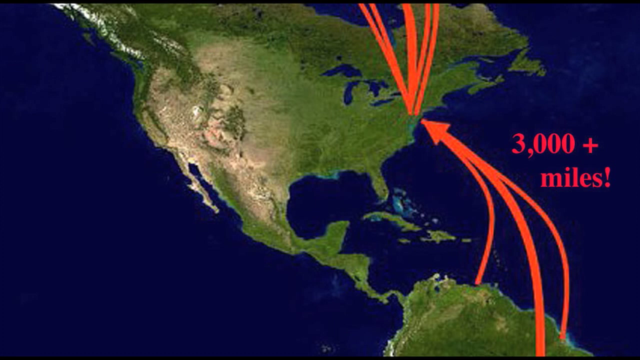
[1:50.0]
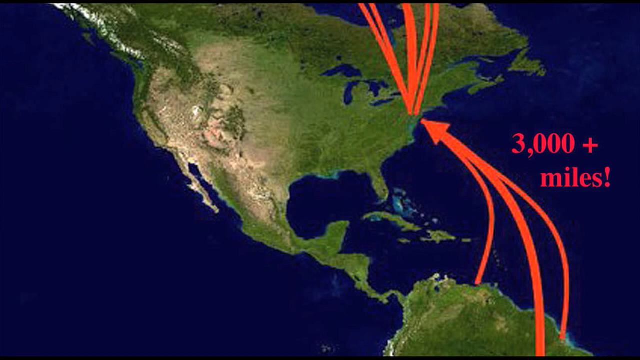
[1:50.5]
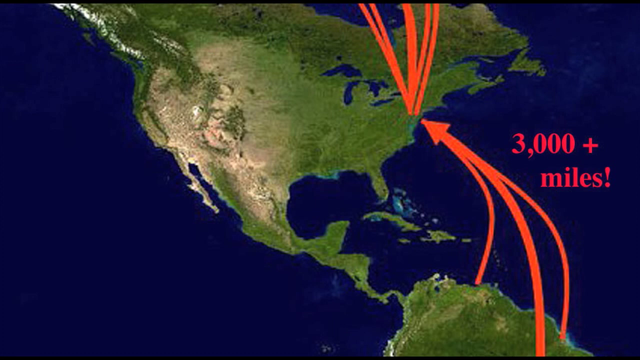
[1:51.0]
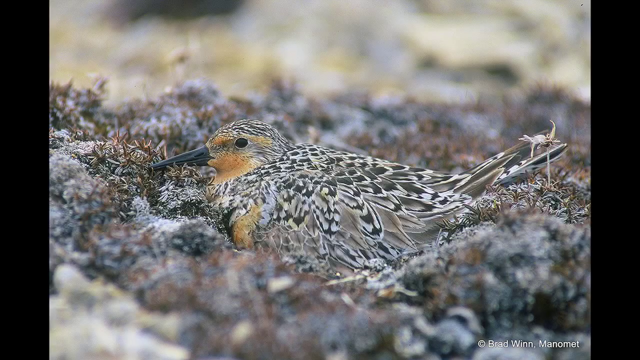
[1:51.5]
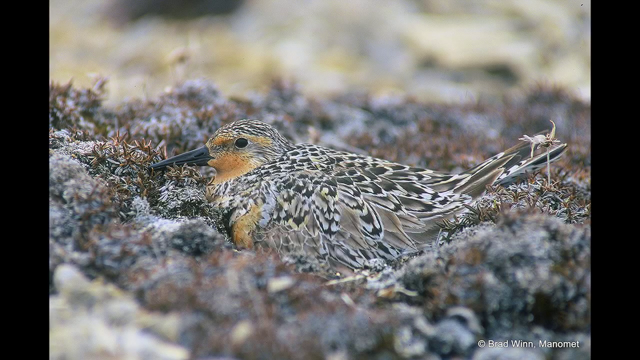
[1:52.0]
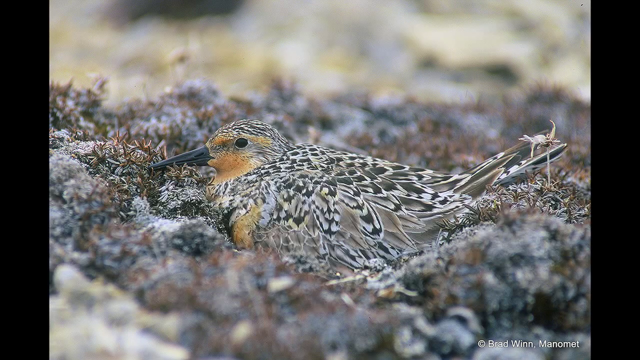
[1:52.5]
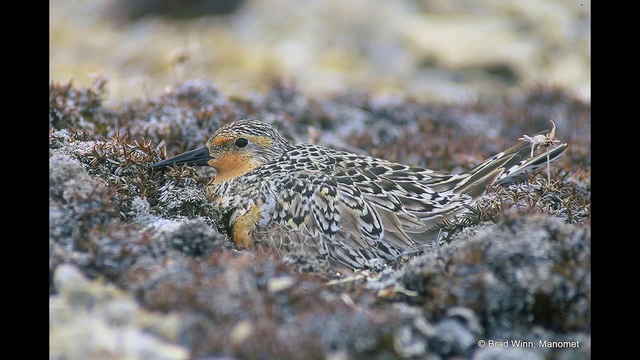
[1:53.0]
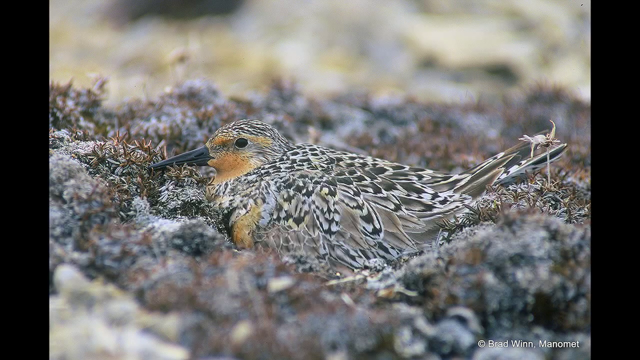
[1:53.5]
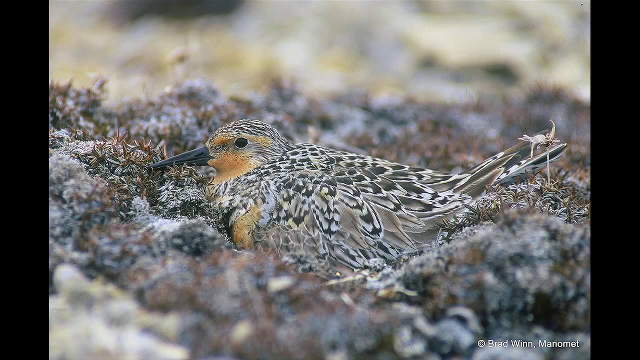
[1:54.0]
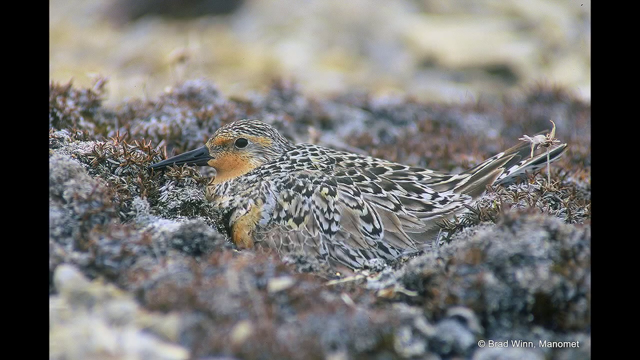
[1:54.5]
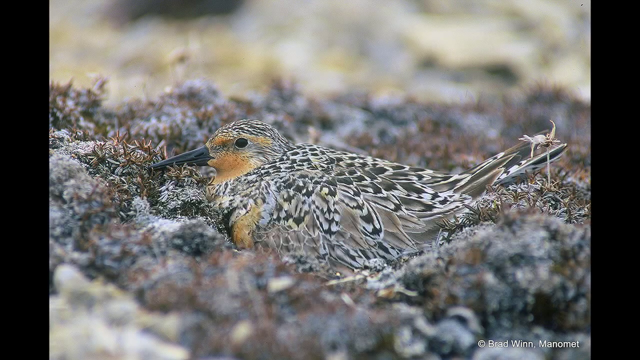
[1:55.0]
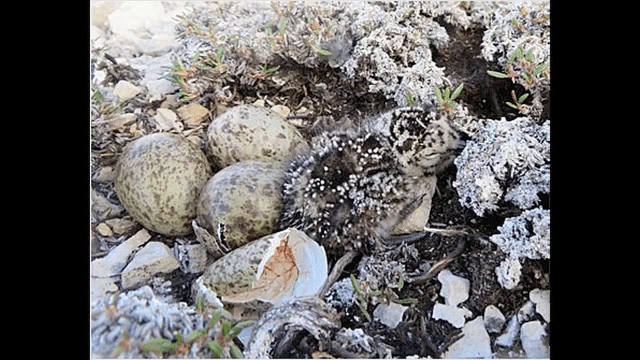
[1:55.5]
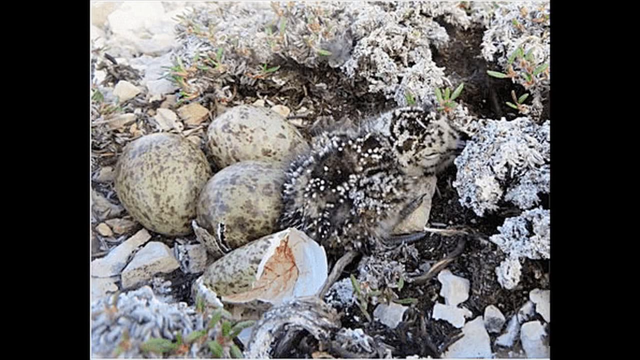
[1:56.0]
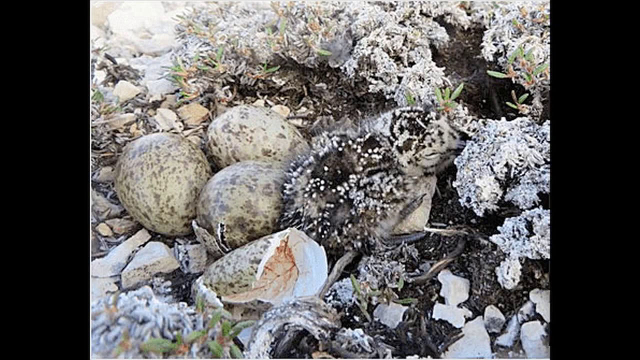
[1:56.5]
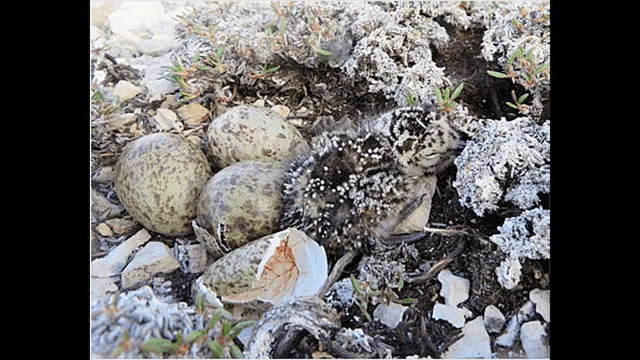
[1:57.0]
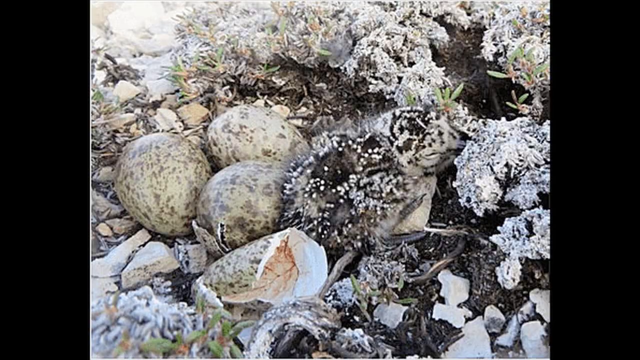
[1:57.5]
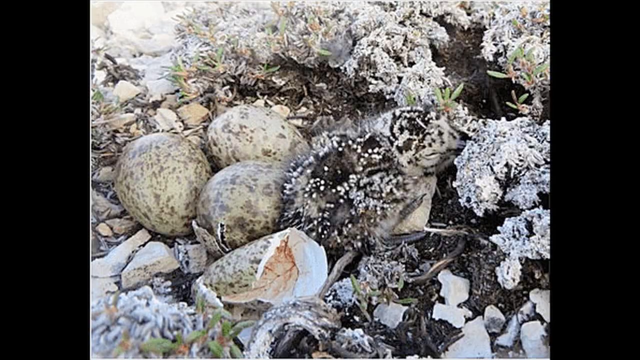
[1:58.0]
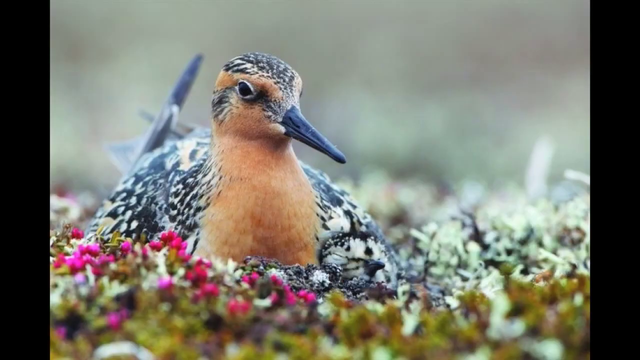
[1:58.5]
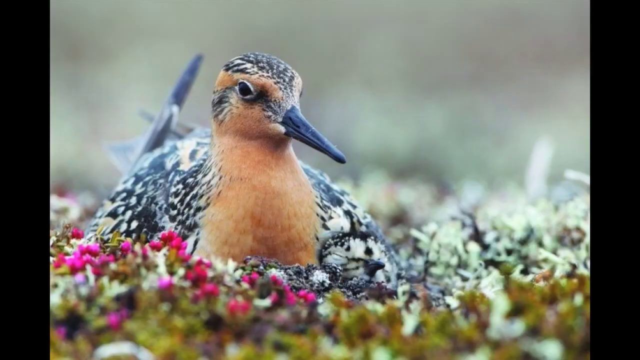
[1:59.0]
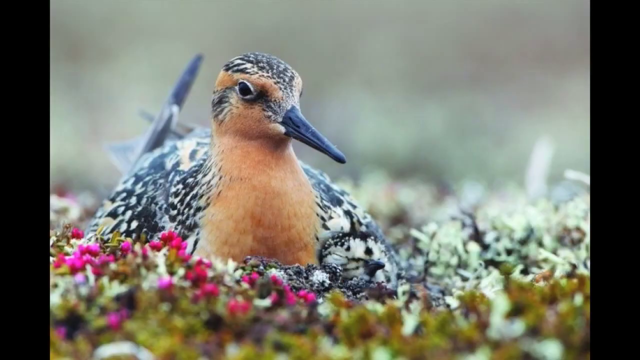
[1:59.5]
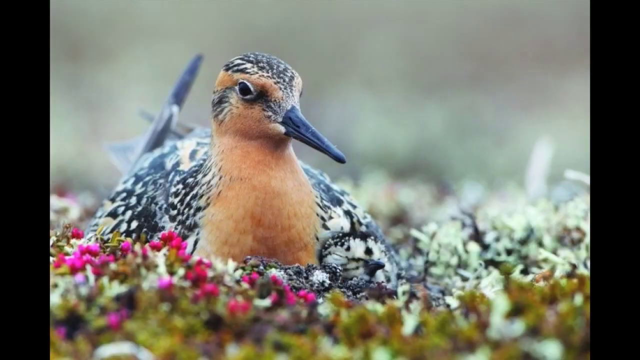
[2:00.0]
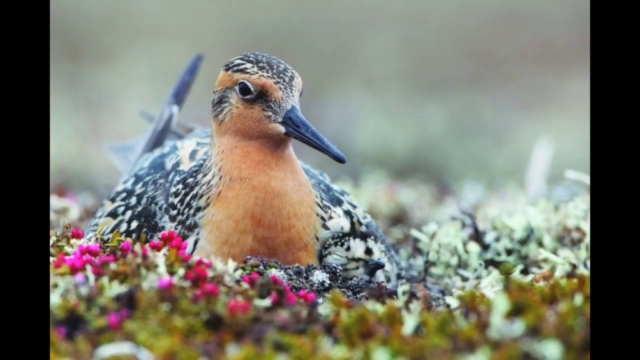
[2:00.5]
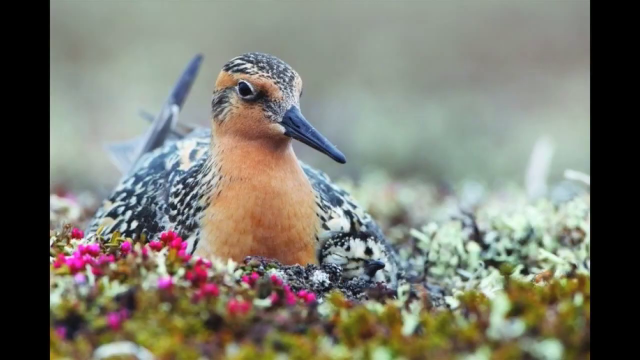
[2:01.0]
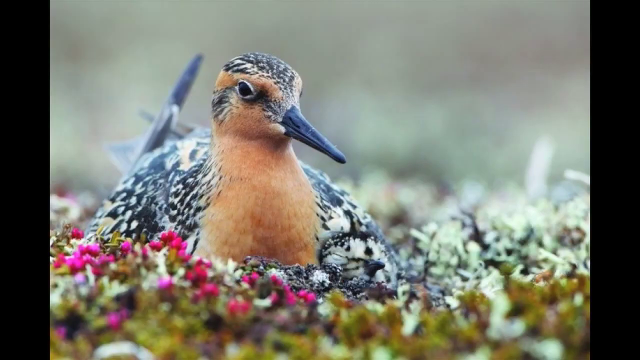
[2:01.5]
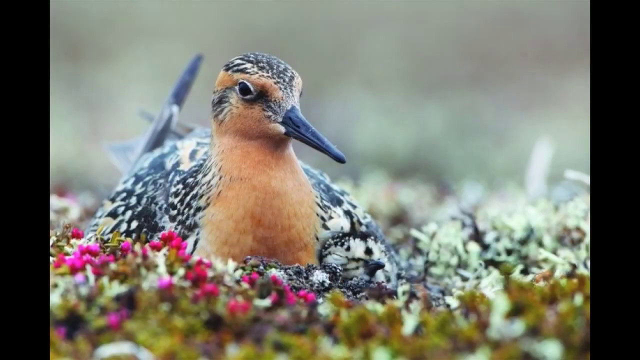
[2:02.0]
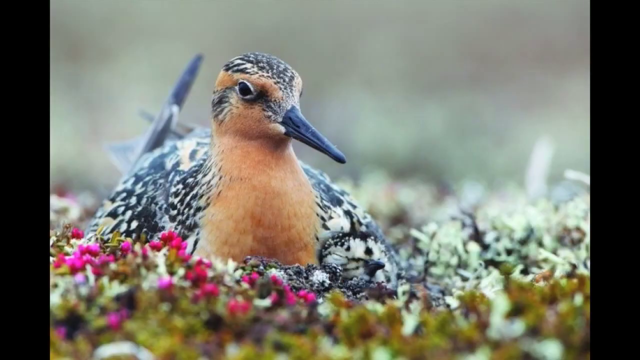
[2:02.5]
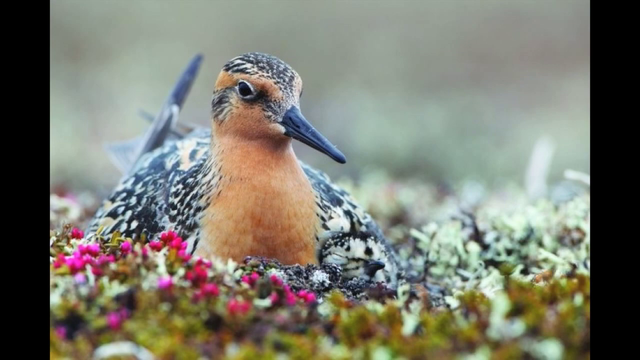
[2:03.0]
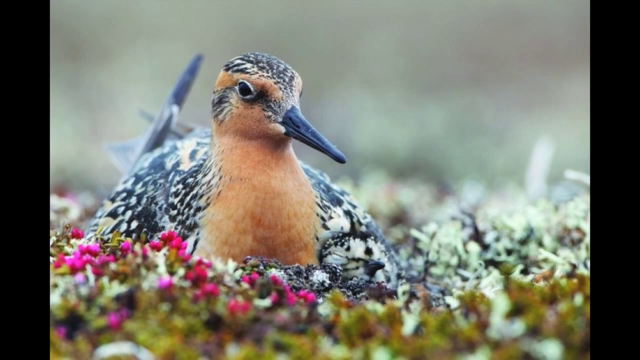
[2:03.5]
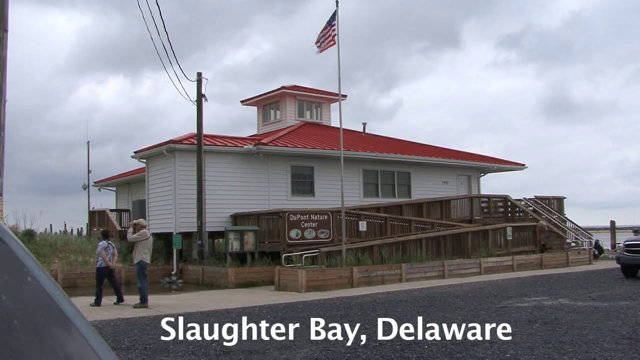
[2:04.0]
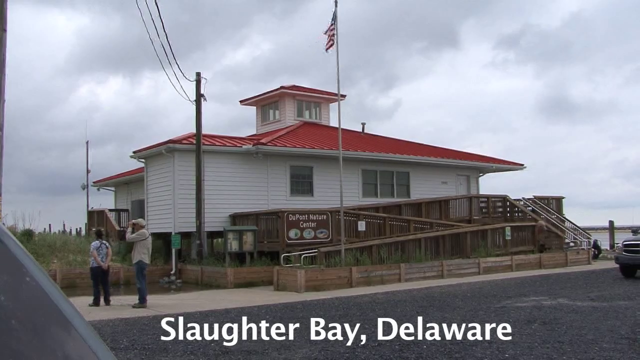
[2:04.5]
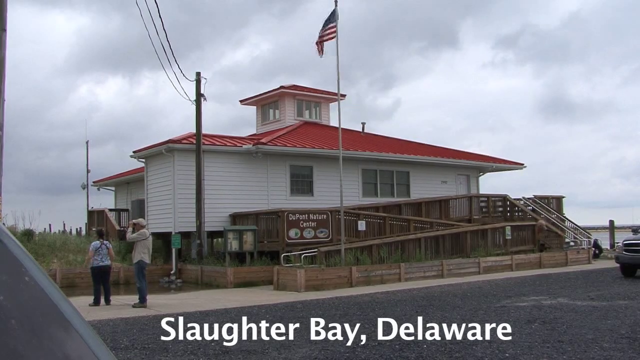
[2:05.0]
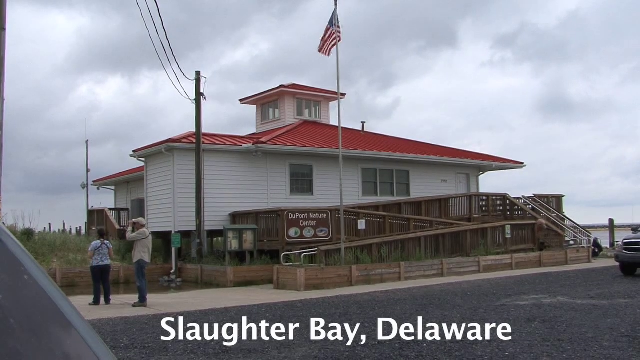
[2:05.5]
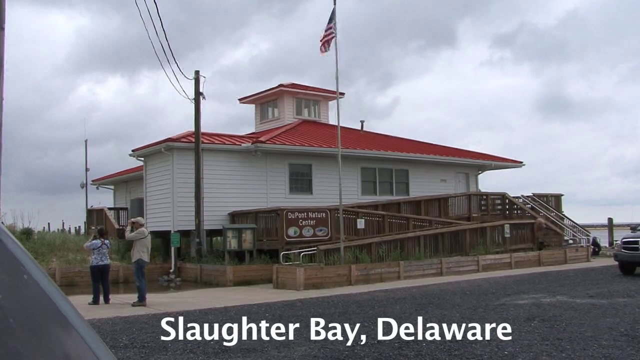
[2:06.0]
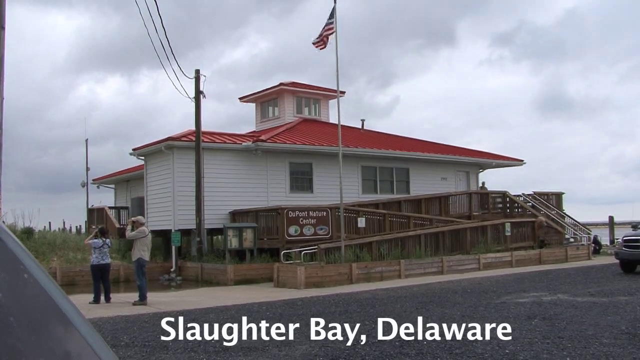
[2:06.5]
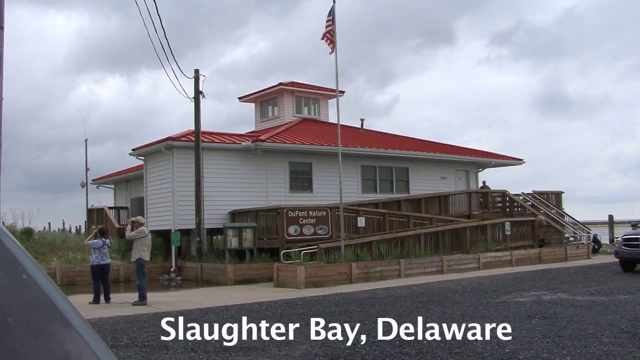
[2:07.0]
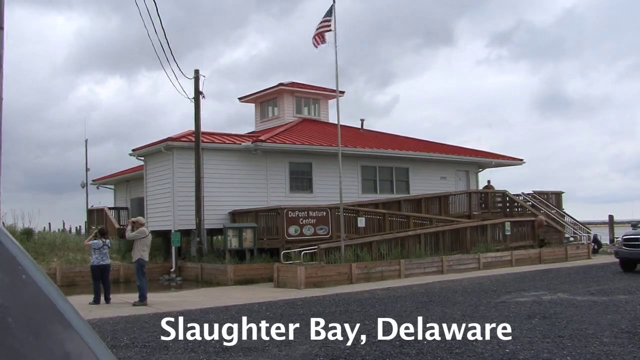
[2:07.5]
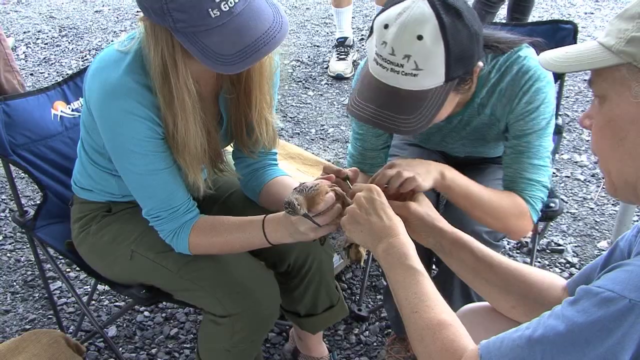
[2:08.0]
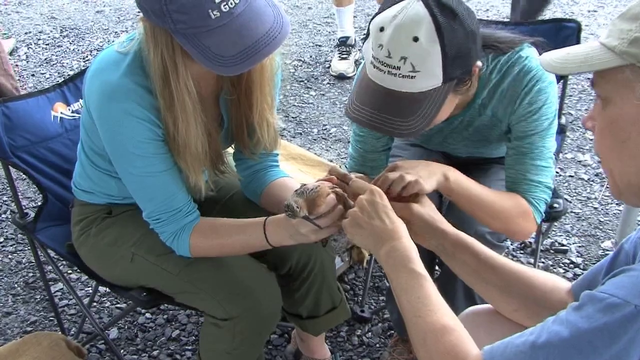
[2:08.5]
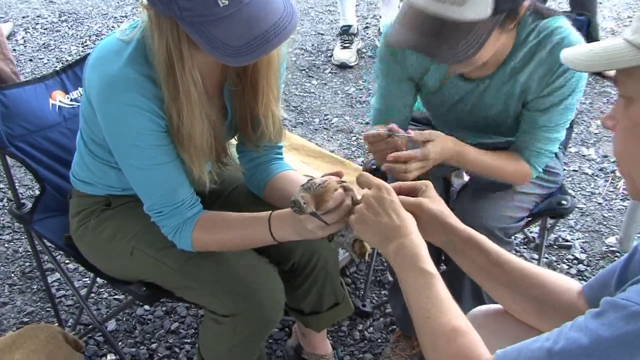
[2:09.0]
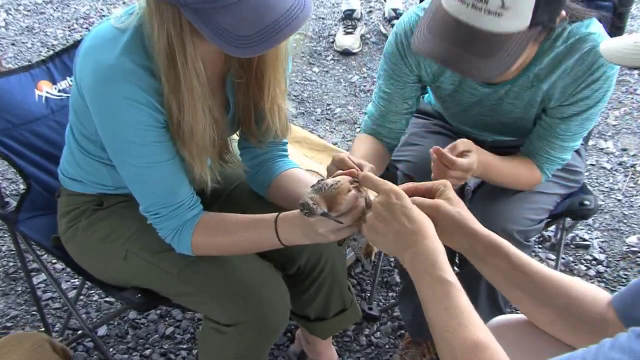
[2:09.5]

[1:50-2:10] A close-up shows the red knot, a medium-sized shorebird, along with its chicks and eggs. The eggs have a marbled appearance; one is cracked, and what looks like a chick is lying on top of the eggs. Another close-up of the bird shows a pointy black beak and a speckled appearance around the wings and tail as well as the middle of the head, while the neck area and face are tan to orange. The next scene shows a coastal house by the sea, with text below reading "Slaughter Bay, Delaware". The structure has a red metal roof with a lookout tower above the rooftop, a wooden ramp outside, and a sign that says "DuPont Nature Center".